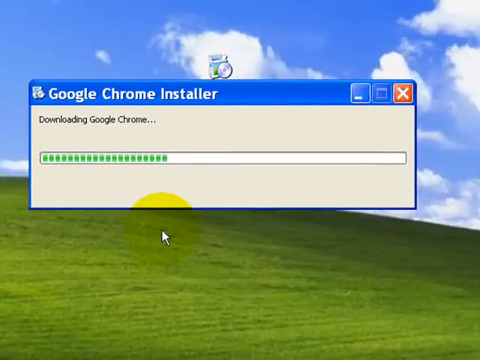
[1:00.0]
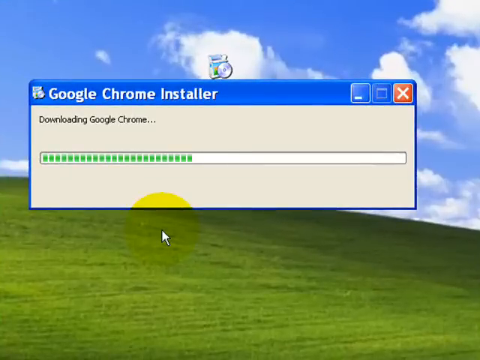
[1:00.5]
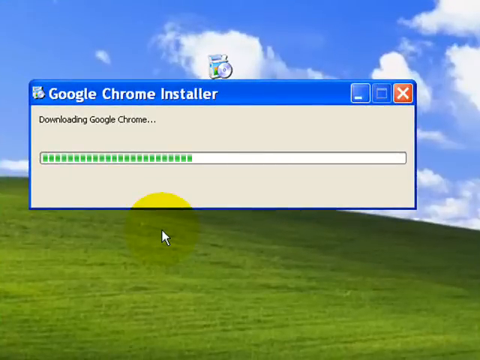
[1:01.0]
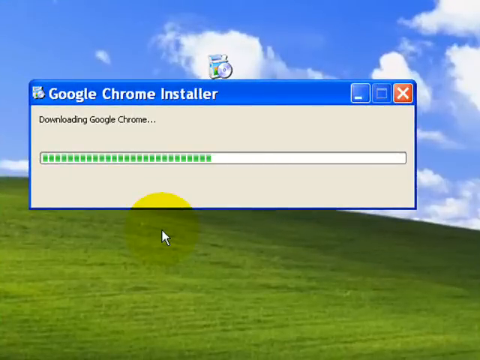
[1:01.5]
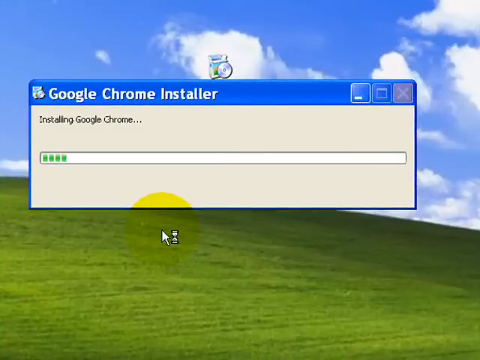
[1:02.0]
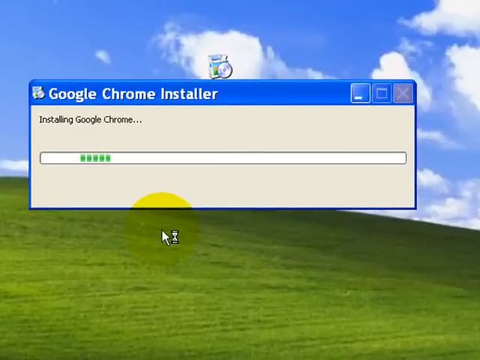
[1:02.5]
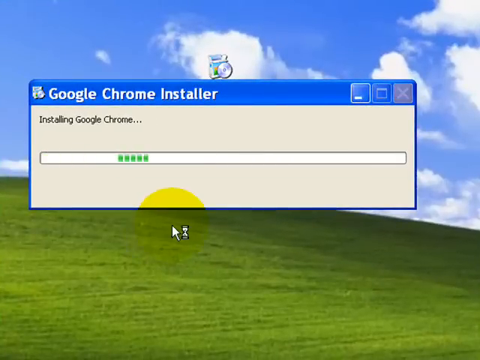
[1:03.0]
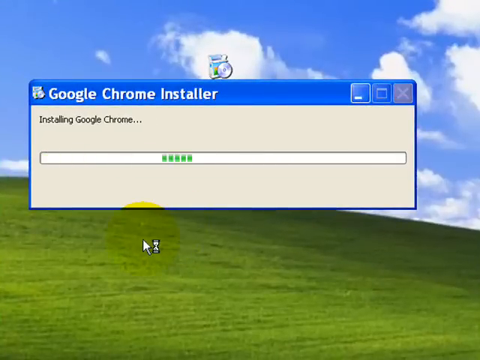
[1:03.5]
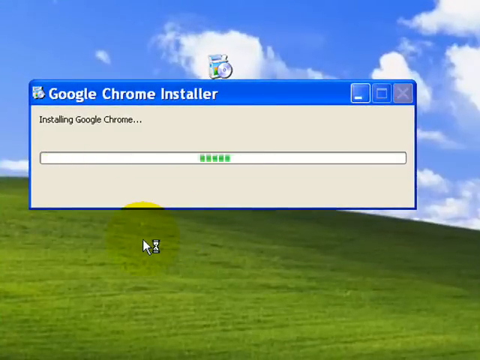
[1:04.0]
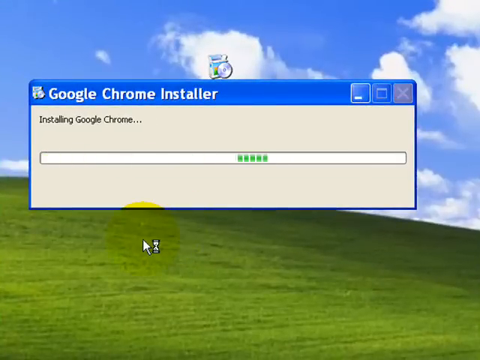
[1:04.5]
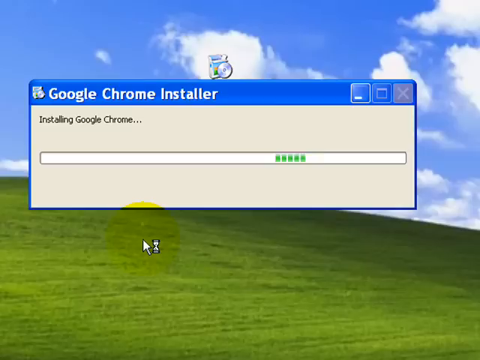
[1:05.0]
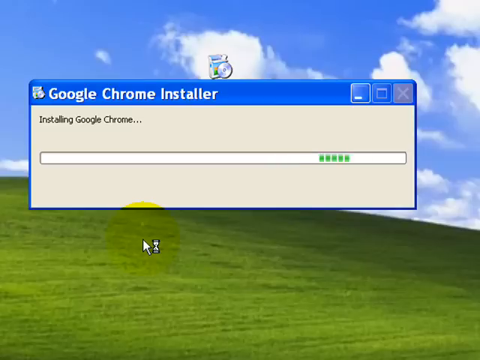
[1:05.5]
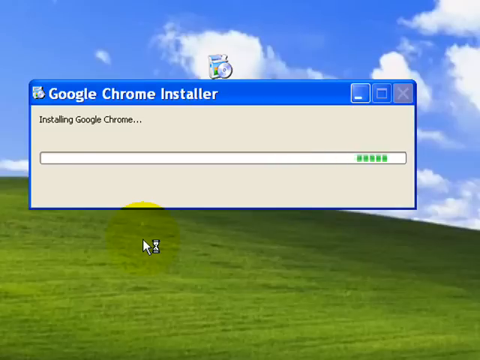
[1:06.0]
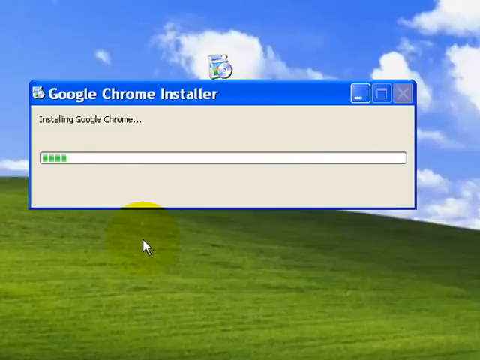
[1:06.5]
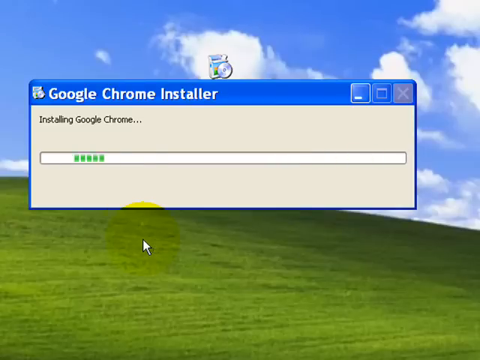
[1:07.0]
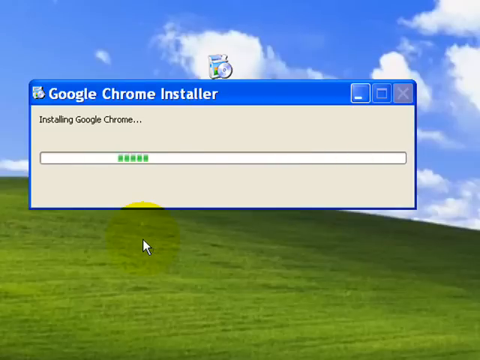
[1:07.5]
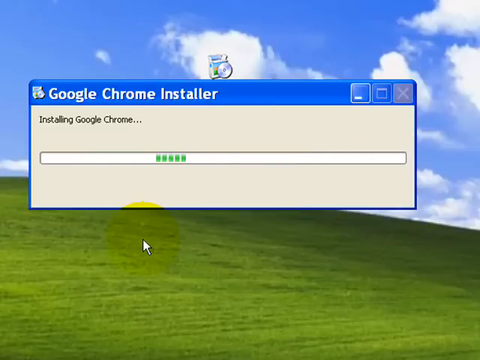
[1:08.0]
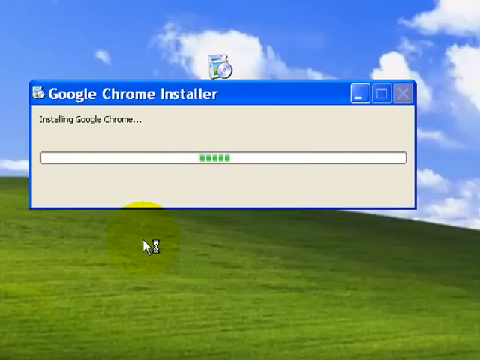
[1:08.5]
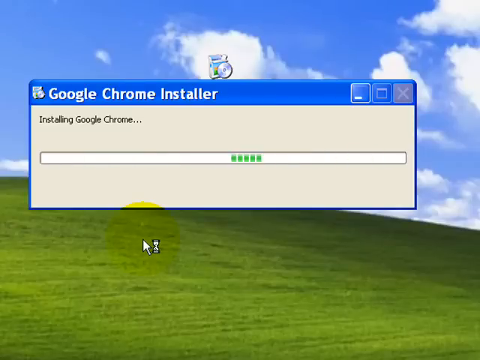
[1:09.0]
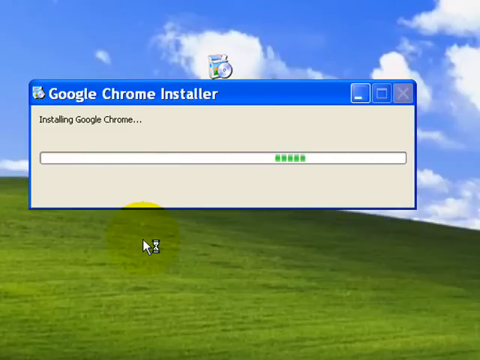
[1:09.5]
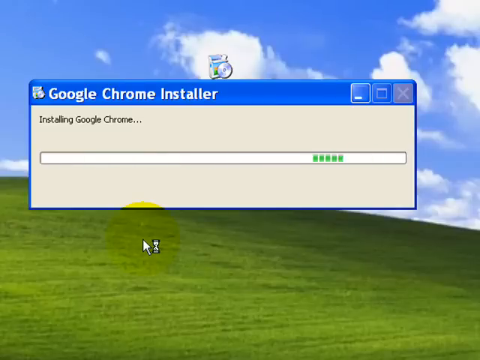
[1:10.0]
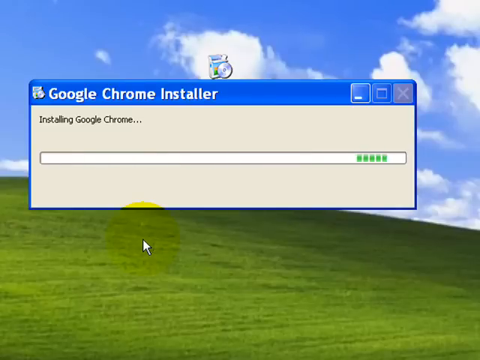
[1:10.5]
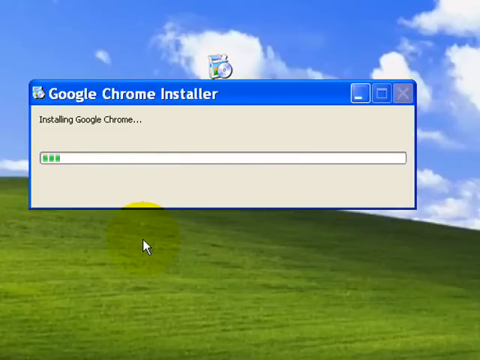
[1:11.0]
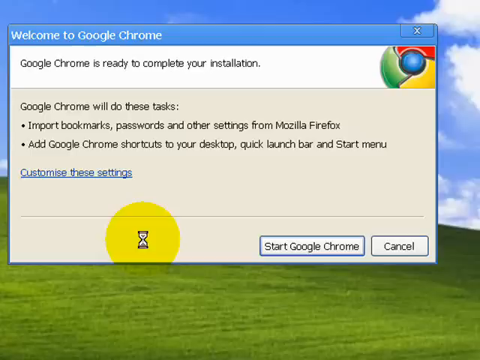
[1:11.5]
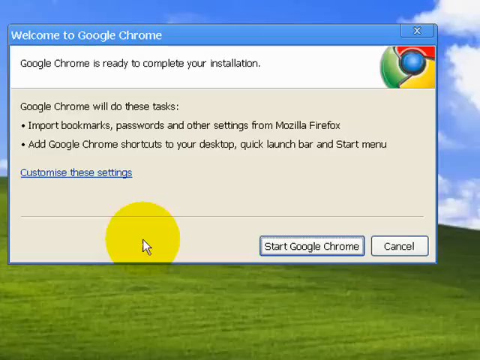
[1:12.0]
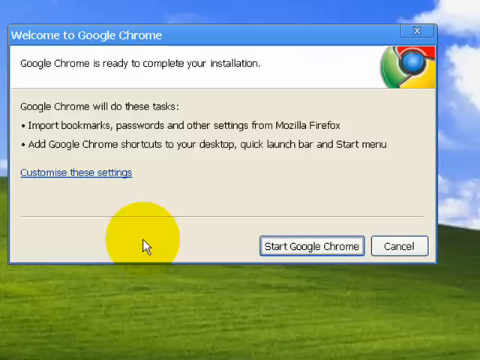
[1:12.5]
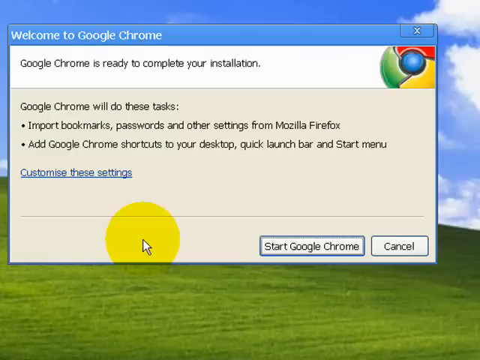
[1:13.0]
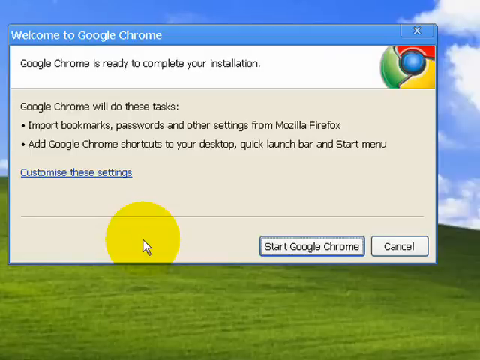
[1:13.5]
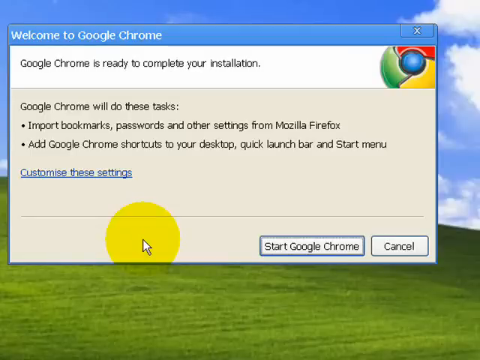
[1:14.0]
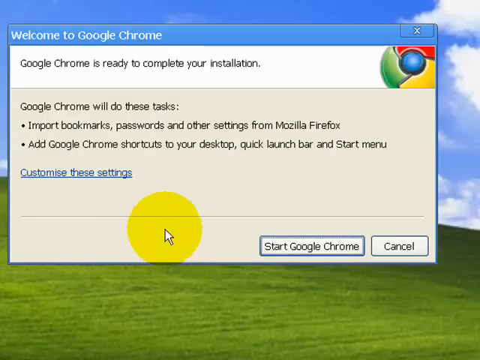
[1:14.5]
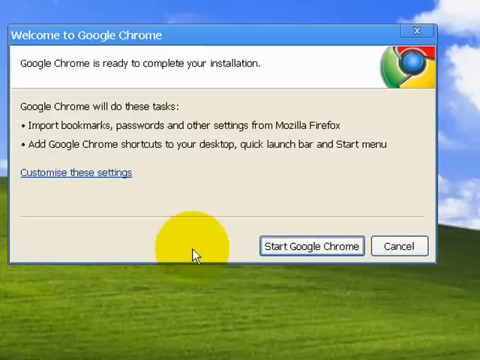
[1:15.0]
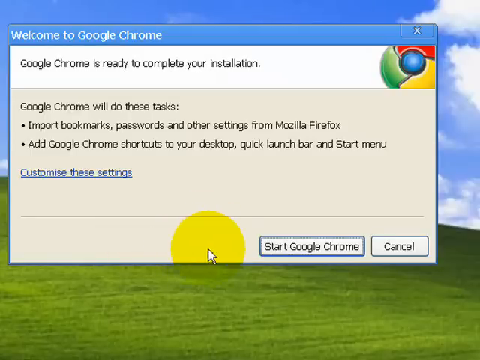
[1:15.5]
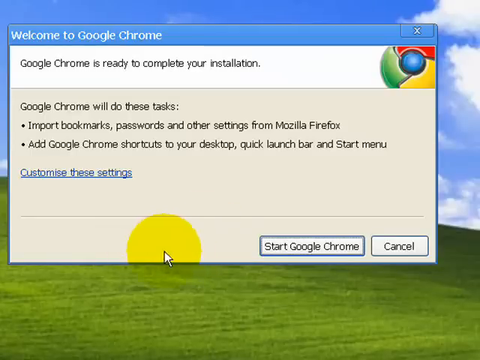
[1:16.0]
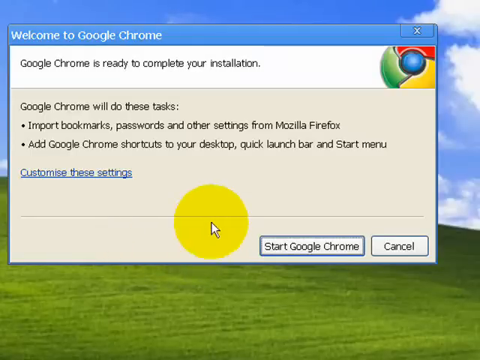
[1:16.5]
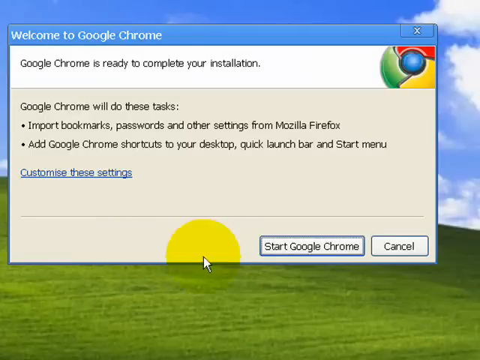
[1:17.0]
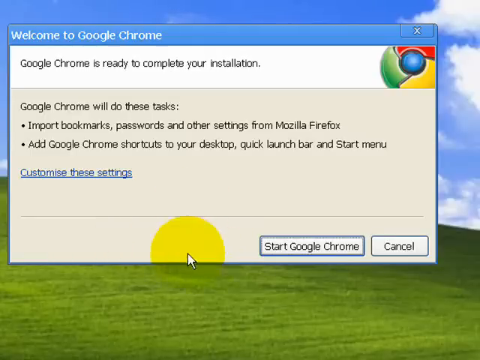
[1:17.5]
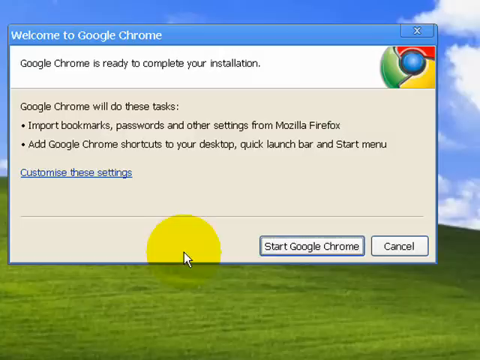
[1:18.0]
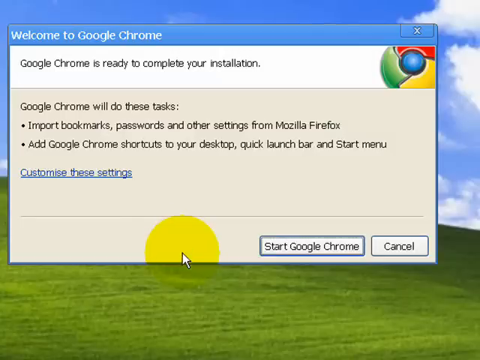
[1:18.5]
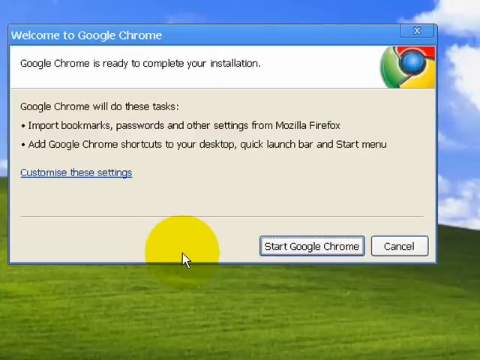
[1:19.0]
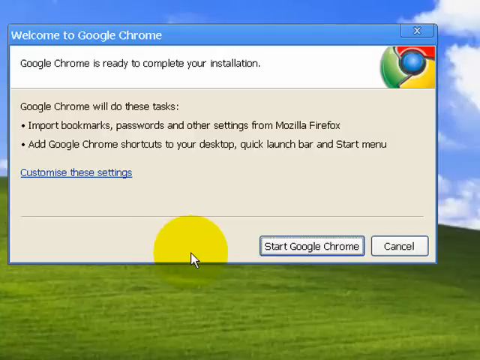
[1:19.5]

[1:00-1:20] The Google Chrome installer continues installing the browser. The mouse pointer, with a large yellow circle around it to make it highly visible, moves around in the middle of the screen while green lines move from the left of the dialog box to the right, indicating install progress. Eventually a window opens reading "welcome to Google Chrome." Its text says "Google Chrome is ready to complete your installation. Google Chrome will do these tasks. Import bookmarks, passwords and other settings from Mozilla Firefox. Add Google Chrome shortcut to your desktop." There is a "customize these settings" button, and in the lower right are two buttons, "start Google Chrome" and "cancel." The person slowly moves the mouse around the window, apparently reading all the text before clicking any buttons.